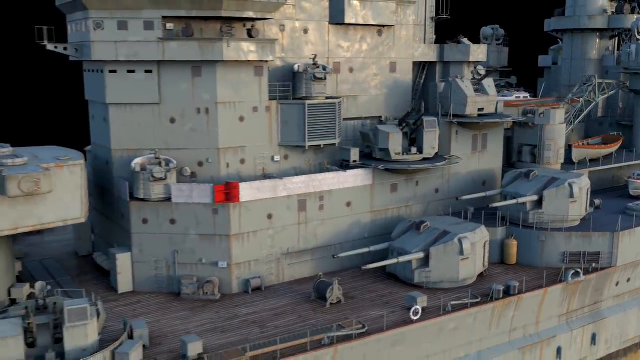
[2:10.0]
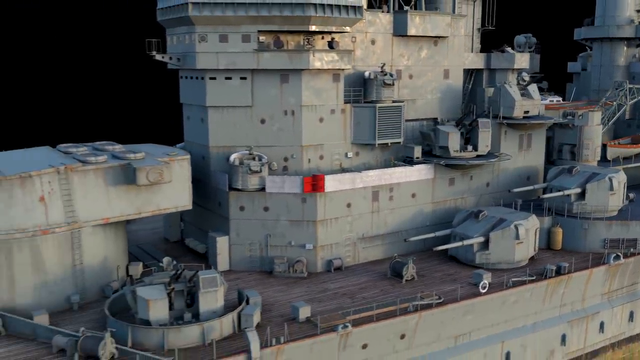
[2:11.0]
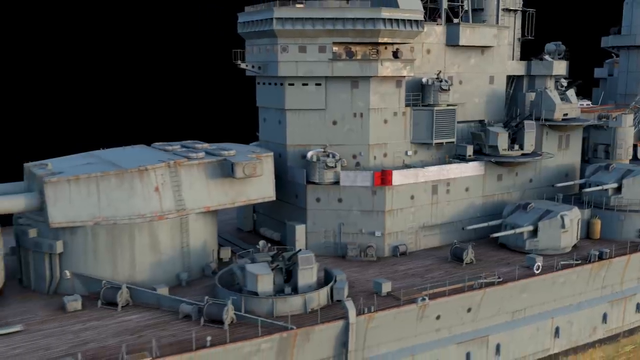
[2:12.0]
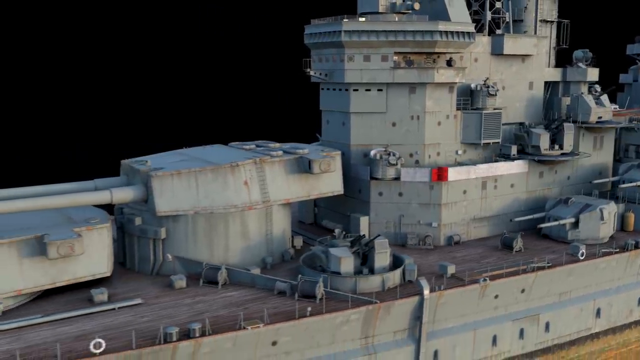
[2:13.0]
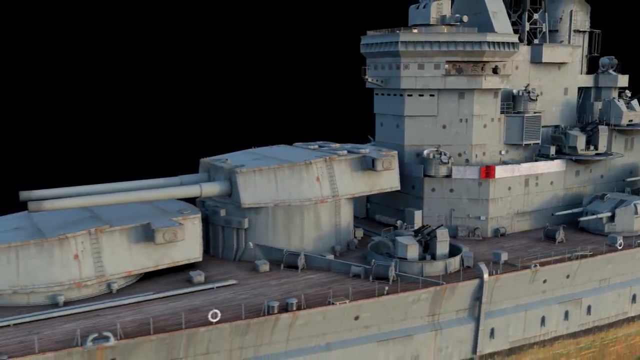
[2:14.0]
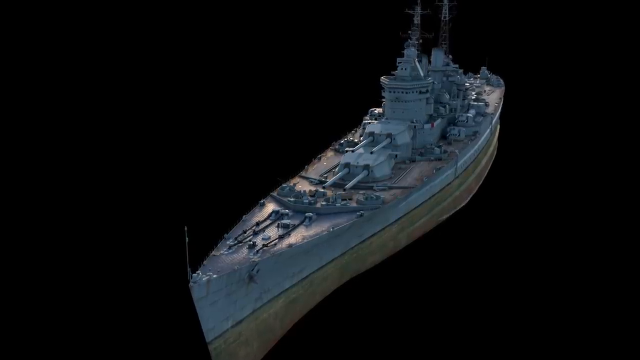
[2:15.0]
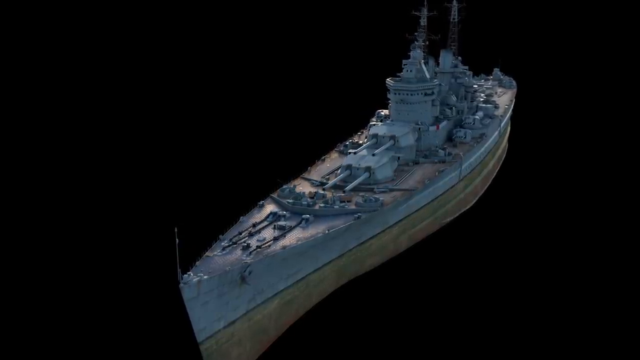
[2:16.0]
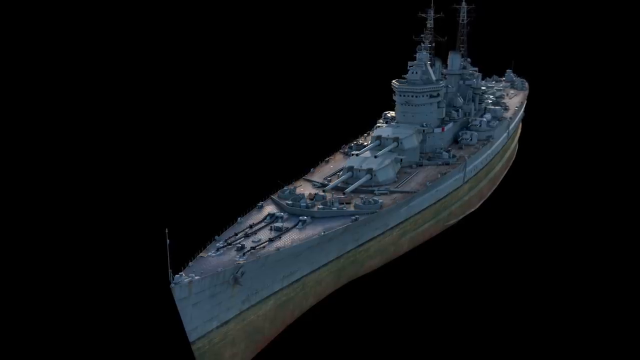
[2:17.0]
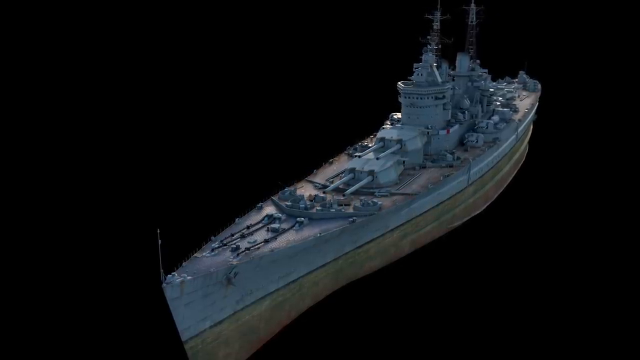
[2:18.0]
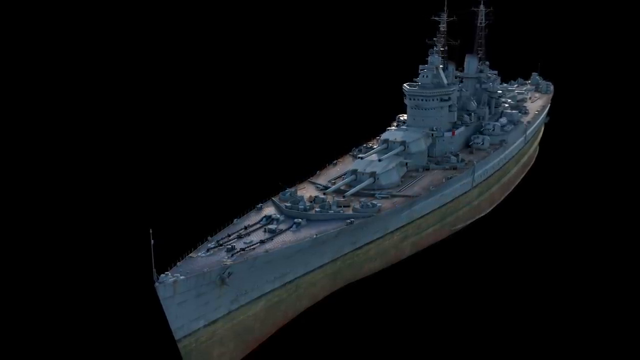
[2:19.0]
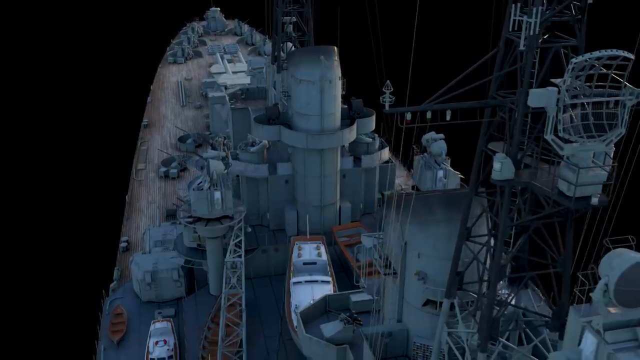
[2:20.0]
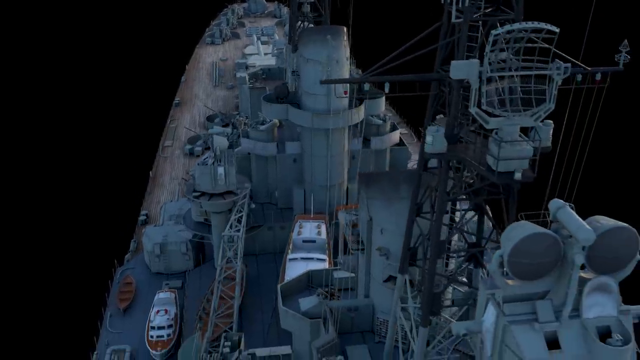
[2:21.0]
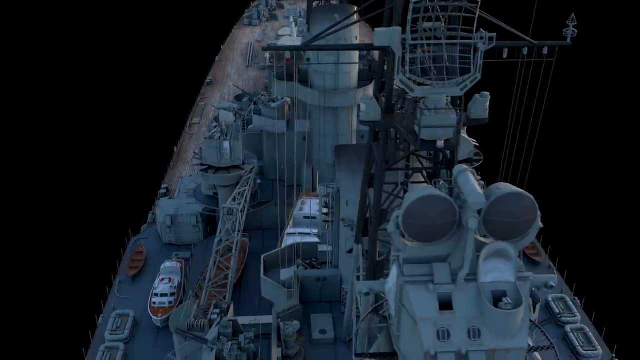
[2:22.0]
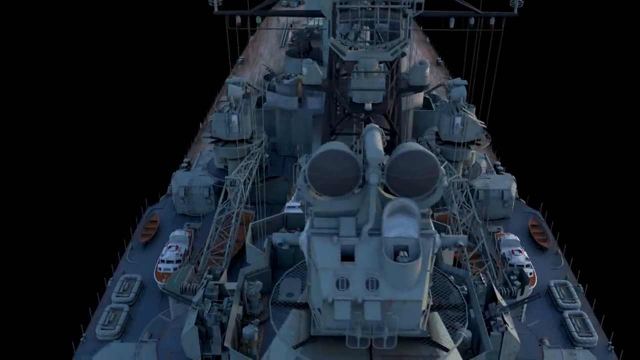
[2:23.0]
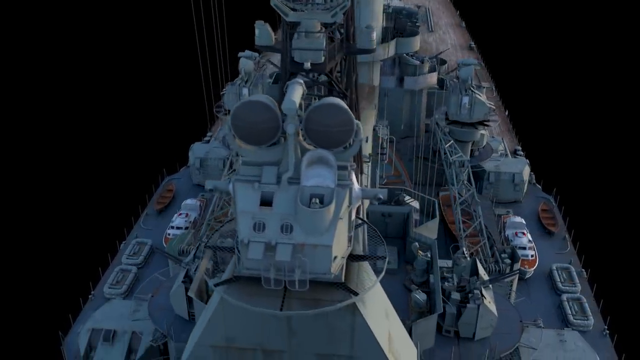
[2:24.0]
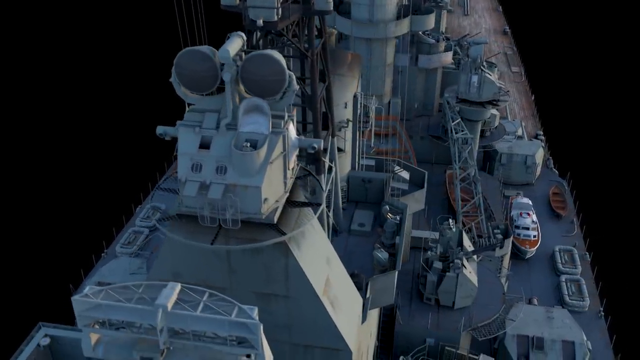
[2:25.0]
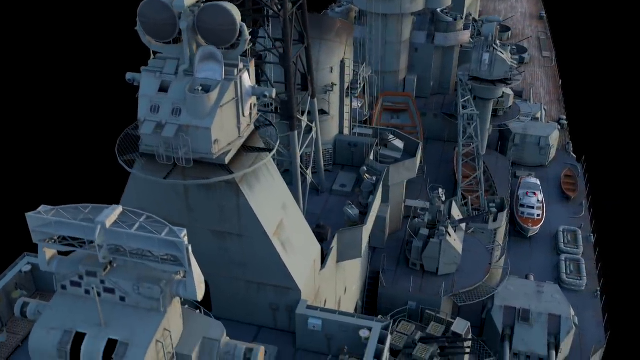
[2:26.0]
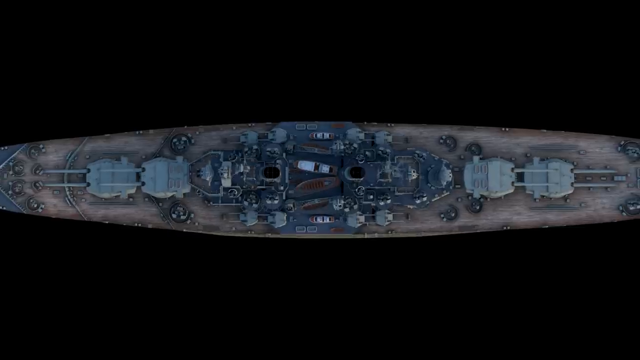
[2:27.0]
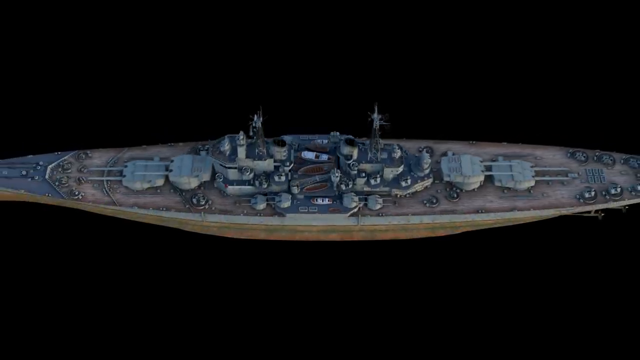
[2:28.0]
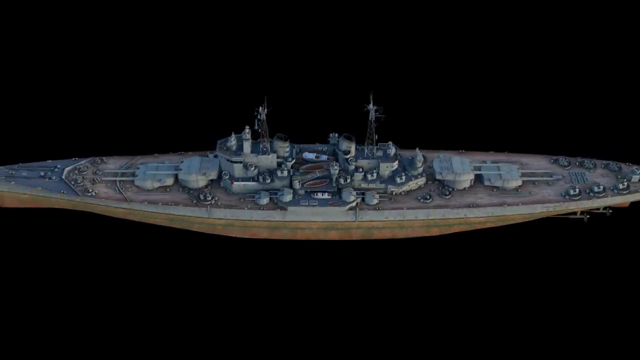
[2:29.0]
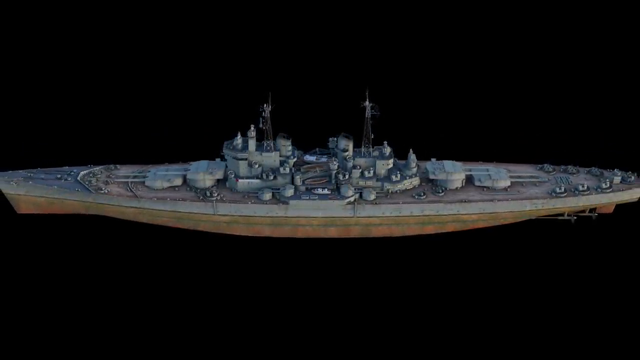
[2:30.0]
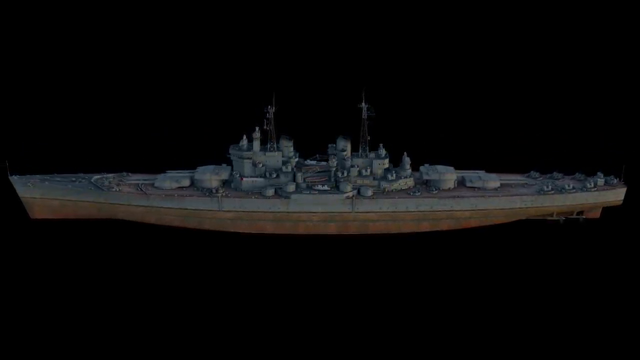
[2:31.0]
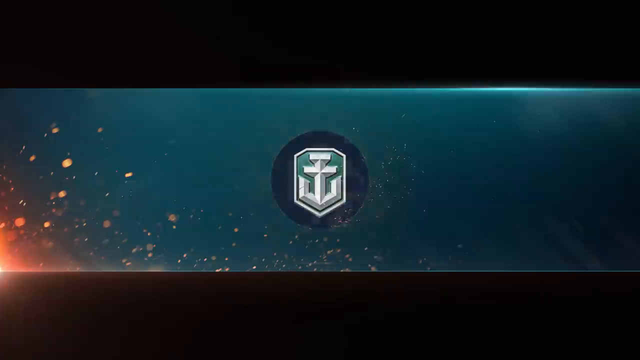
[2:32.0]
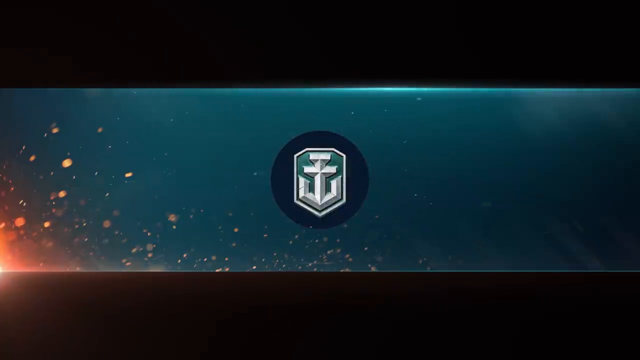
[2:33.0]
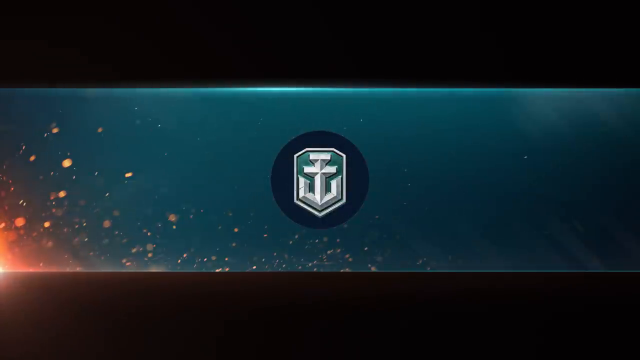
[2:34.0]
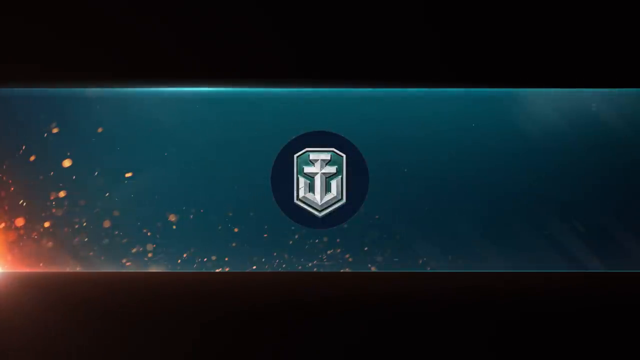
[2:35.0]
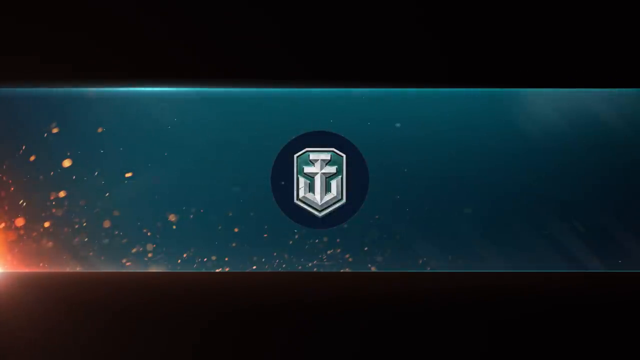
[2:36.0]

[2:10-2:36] On a black background, the CGI rendering shows views looking down on the top of the warship, with extreme detail on all of the wires and antennas on top. The ship pans around slowly so the entire ship can be viewed again, and it spins slowly, showing all of the technology on top, from the tanks to the antennas to the boats. The film concludes with a greenish-blue background, some fire embers coming from the left side, and a white anchor inside a black circle as an insignia, probably the business symbol.